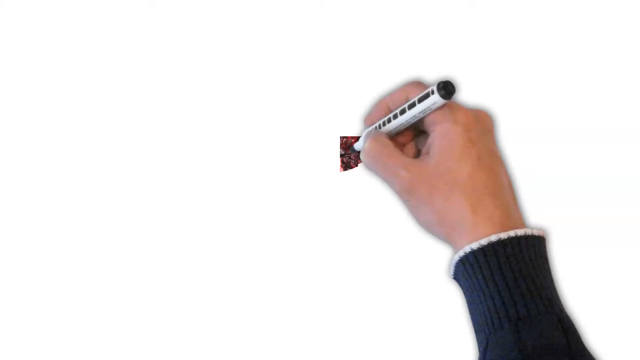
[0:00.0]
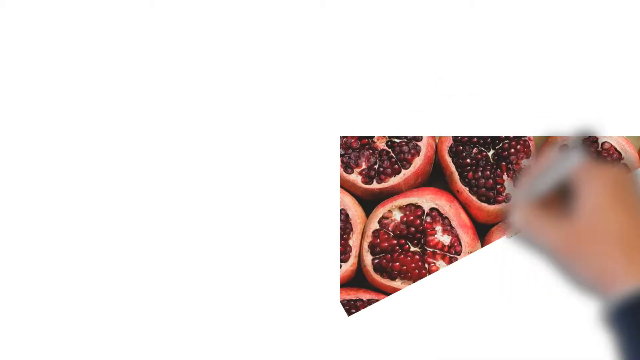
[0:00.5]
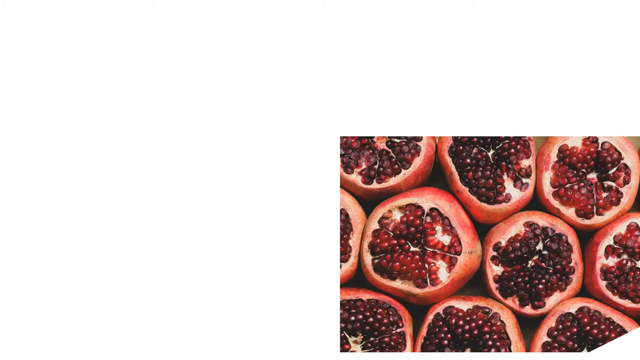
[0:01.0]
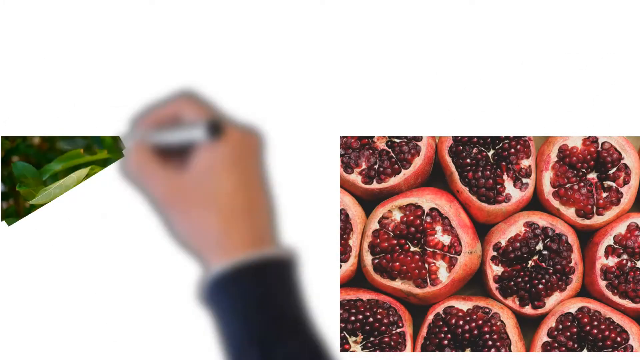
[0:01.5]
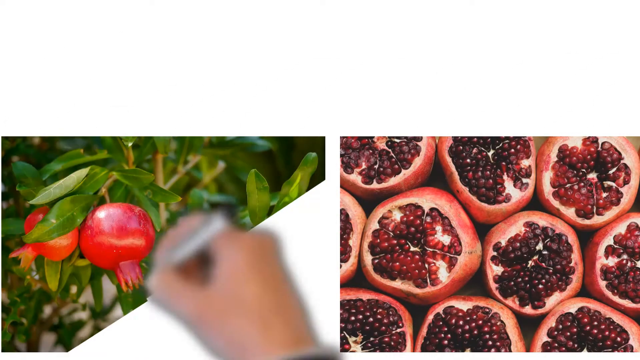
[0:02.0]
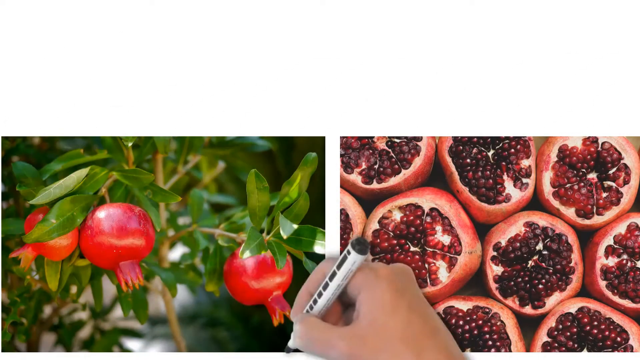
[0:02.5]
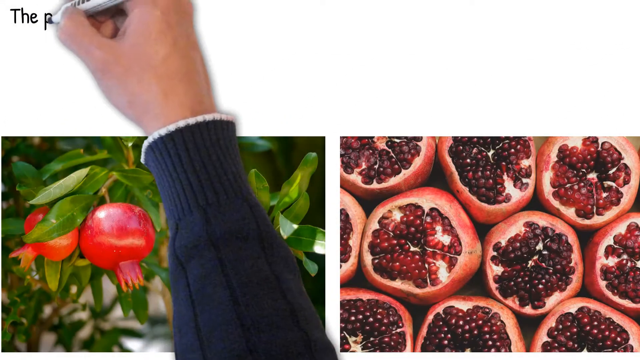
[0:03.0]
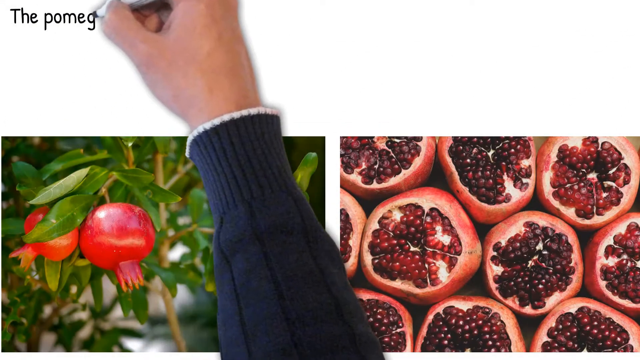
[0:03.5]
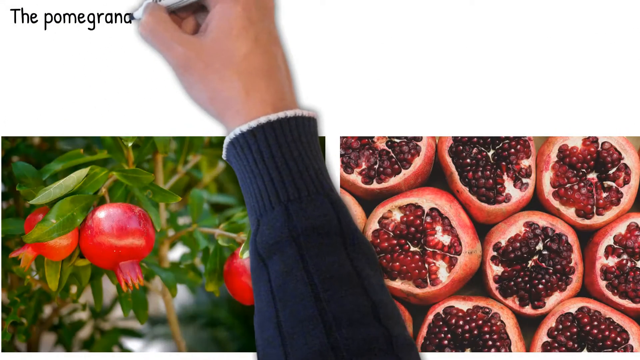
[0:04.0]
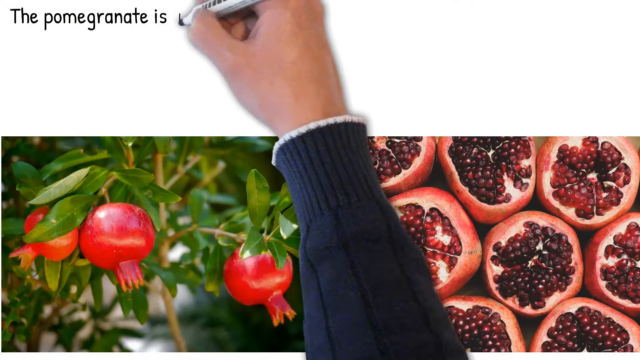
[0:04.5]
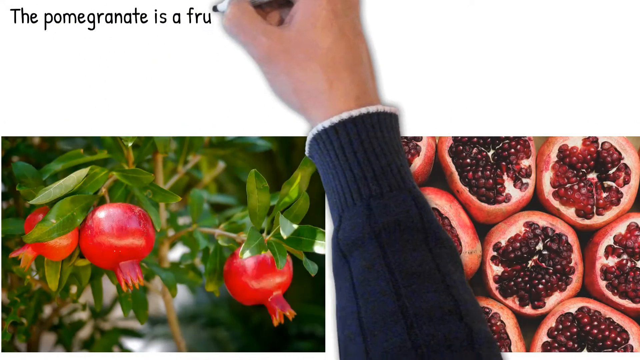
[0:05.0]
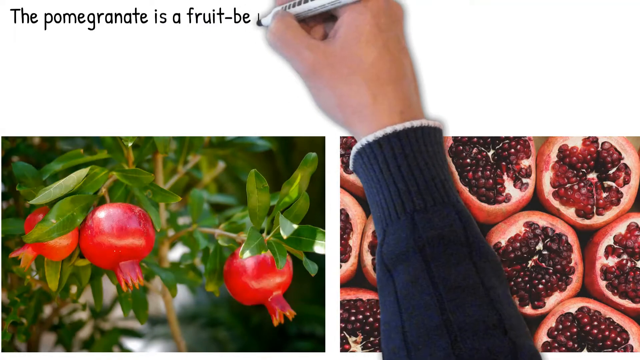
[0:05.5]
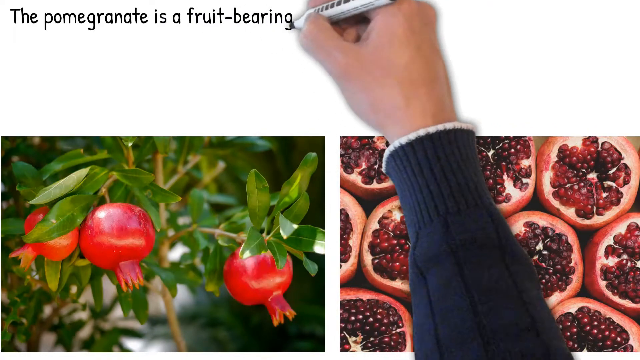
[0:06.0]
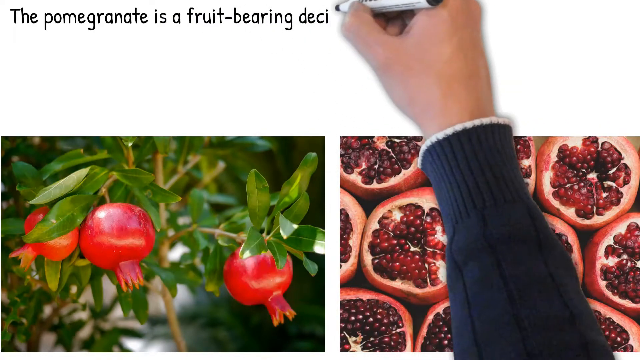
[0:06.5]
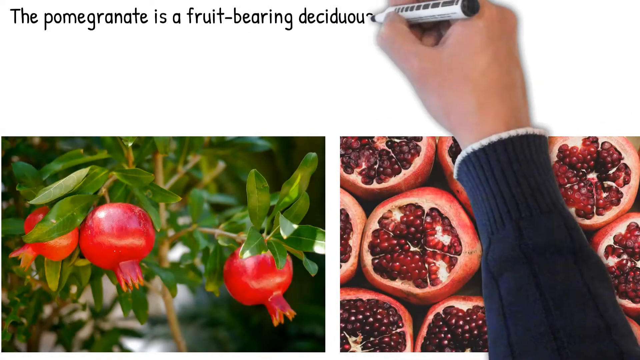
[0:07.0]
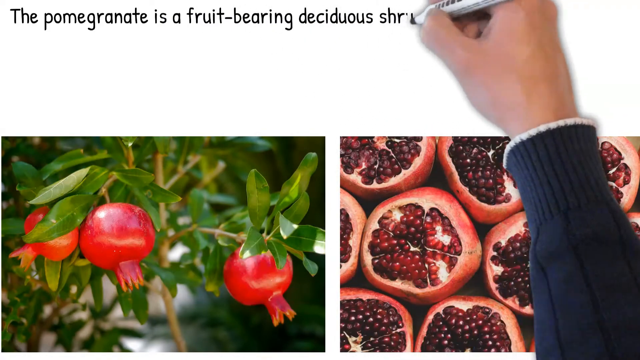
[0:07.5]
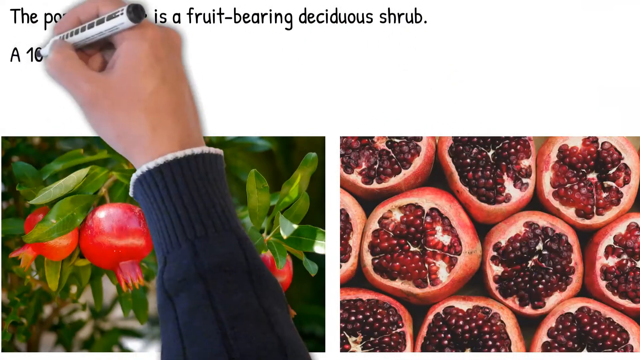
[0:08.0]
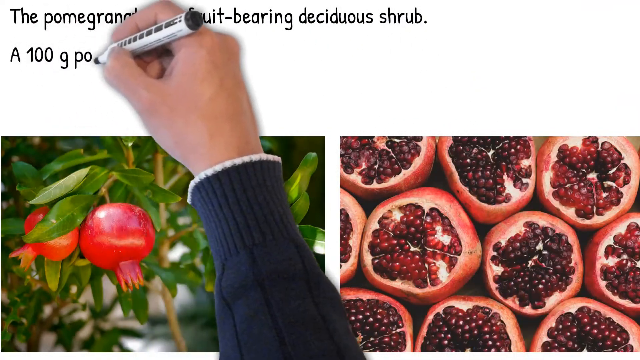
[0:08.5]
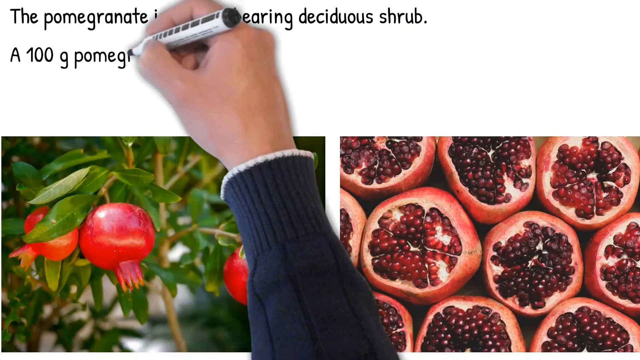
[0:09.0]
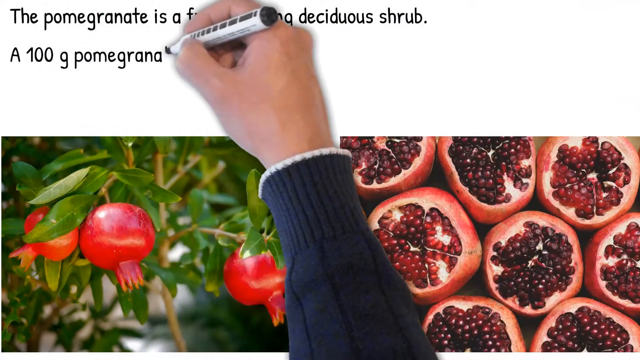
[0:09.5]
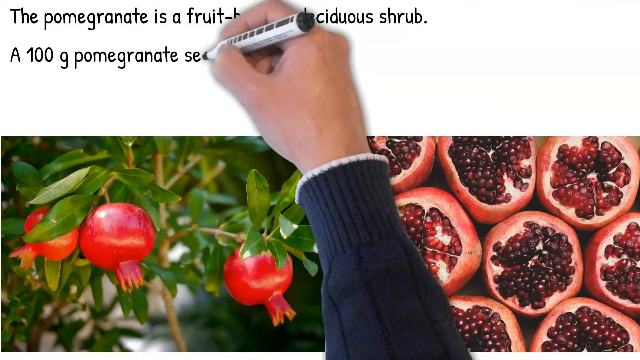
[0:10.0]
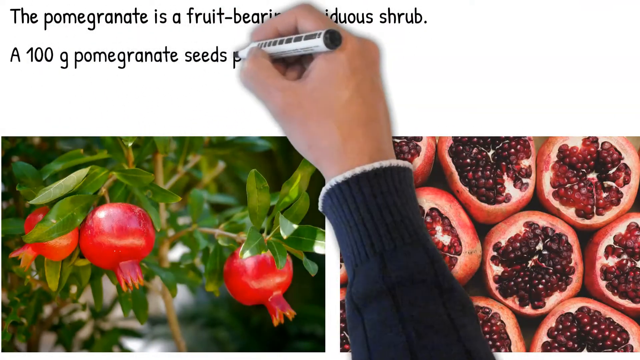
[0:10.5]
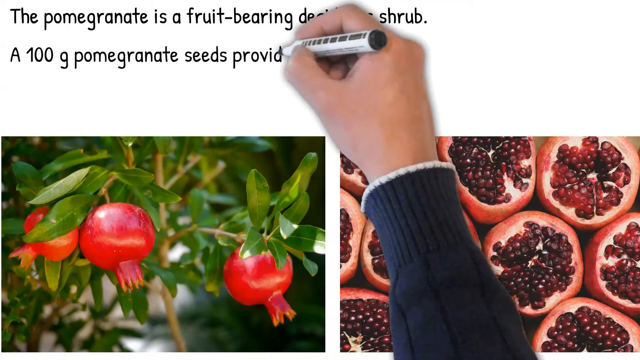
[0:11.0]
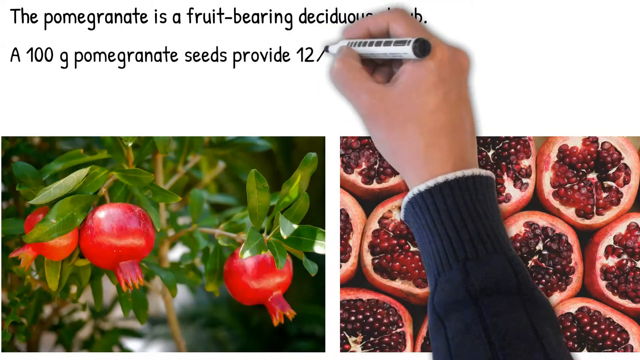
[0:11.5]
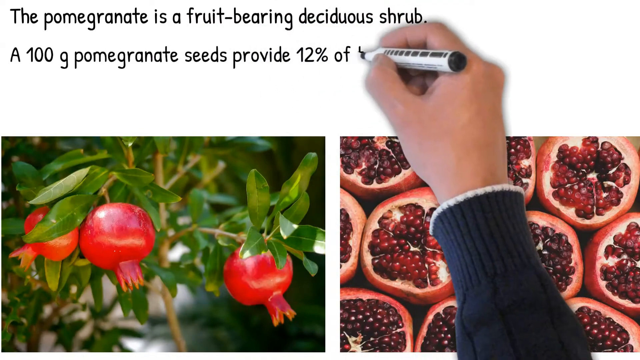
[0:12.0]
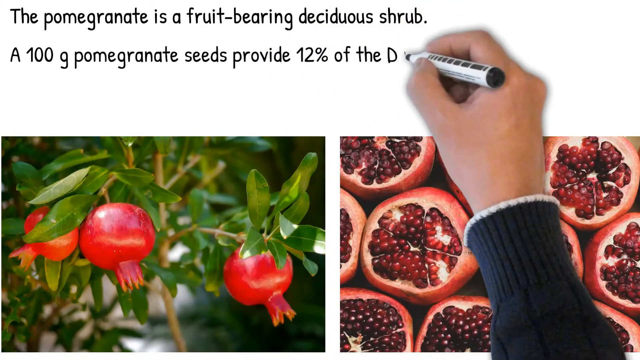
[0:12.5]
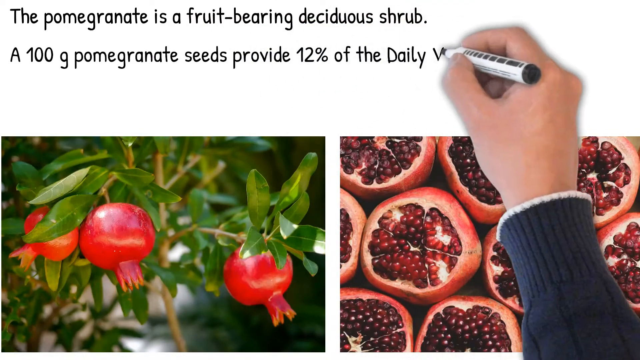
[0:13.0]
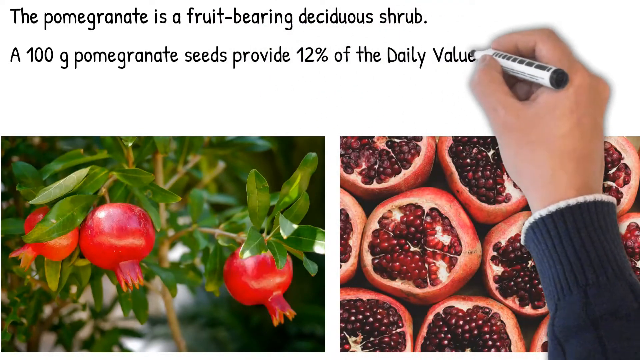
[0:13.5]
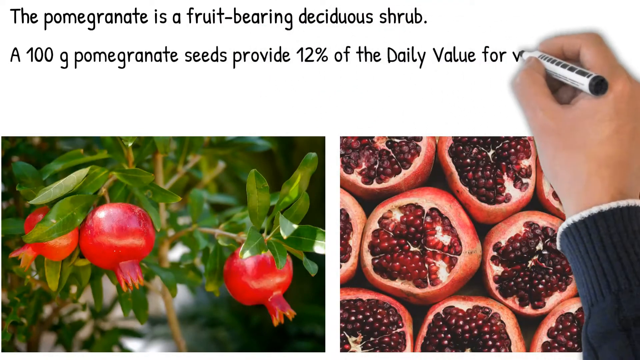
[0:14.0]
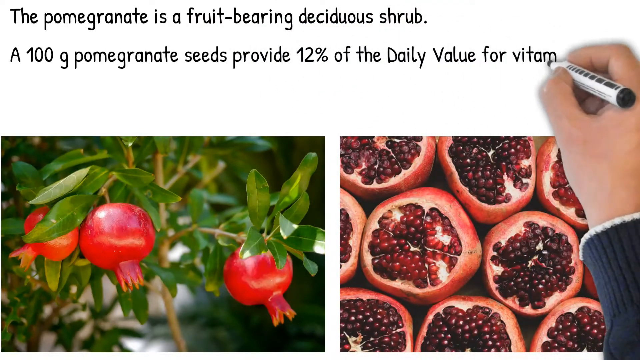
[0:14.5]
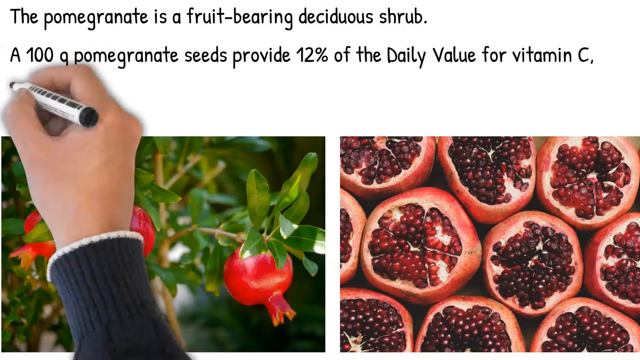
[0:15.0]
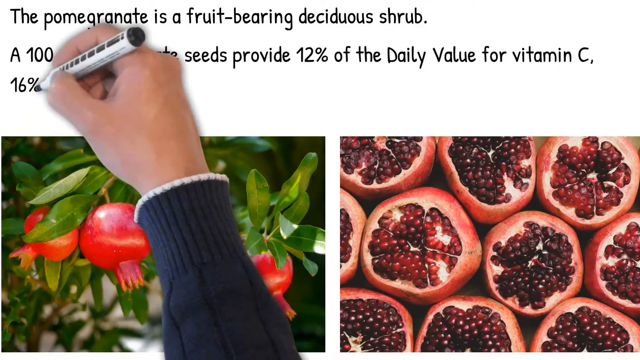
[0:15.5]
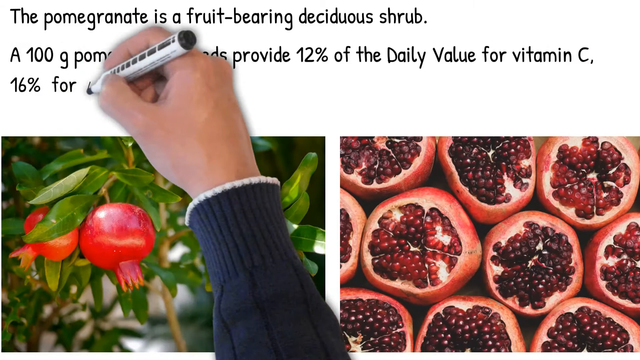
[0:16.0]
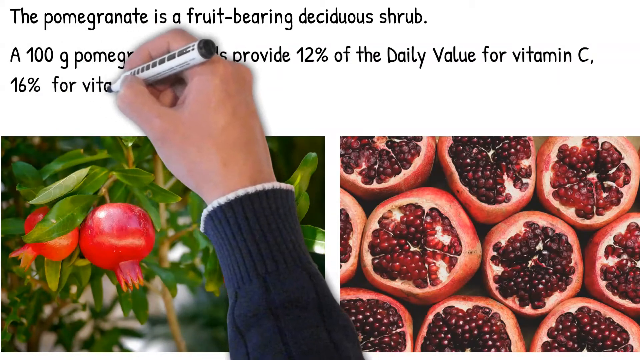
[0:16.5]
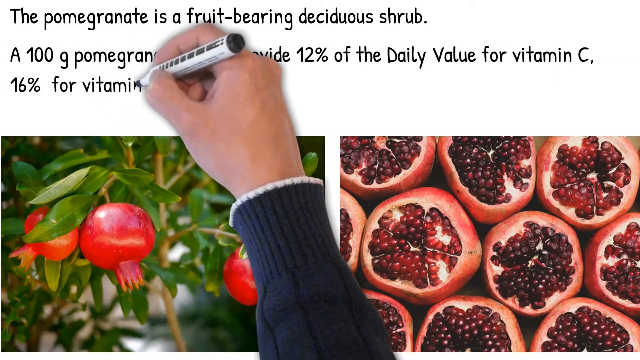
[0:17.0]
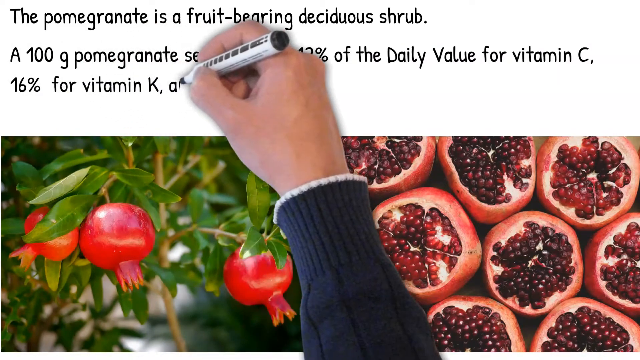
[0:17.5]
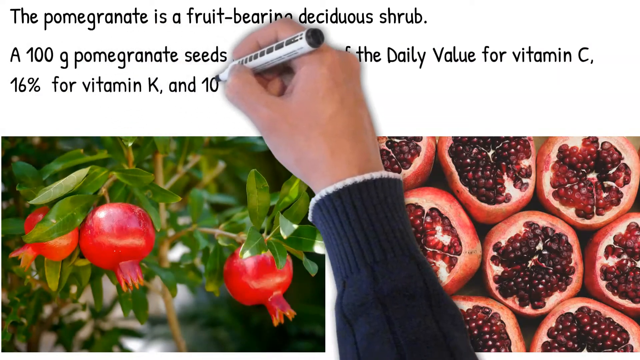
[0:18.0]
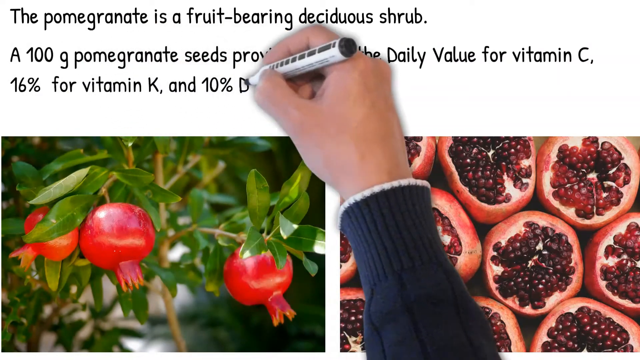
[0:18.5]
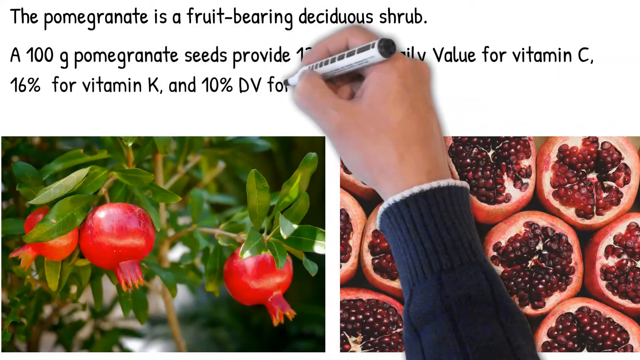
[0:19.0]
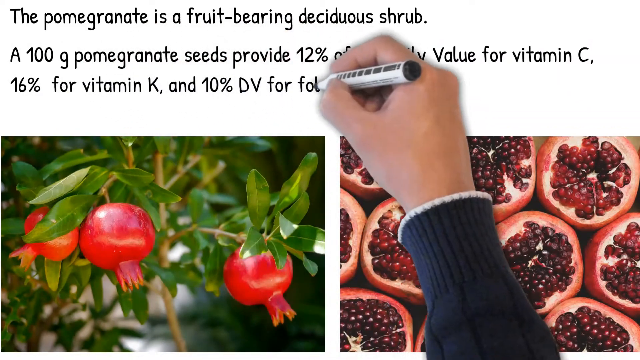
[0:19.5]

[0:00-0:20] Against a white background, an image of a hand holding a pen appears and seems to draw out a photograph of cut pomegranates in the lower right corner. The hand then moves and appears to create a second photograph, of pomegranates on a shrub. The hand, which does not flex its fingers but just holds the pen, moves up to a white area at the top and writes text one letter at a time. The text apparently reads "the pomegranate is a fruit bearing deciduous shrub. A 100 gram pomegranate seeds provide 12% of the daily value for vitamin C, 16% for vitamin K, and 10% DV for folate." The hand moves quickly, and once the words are written the scene shifts quickly.